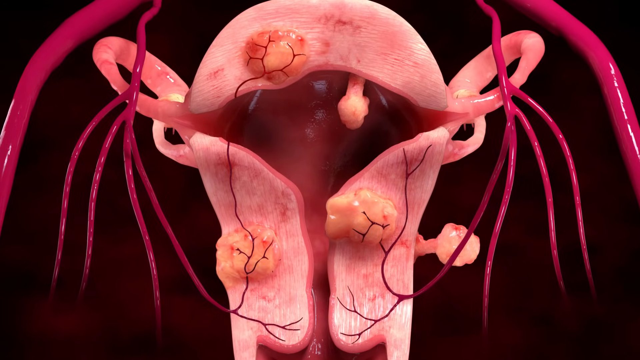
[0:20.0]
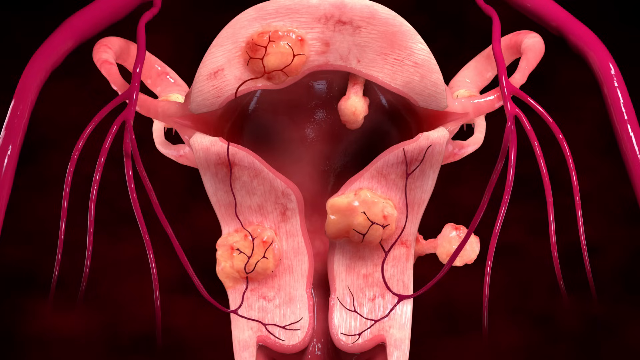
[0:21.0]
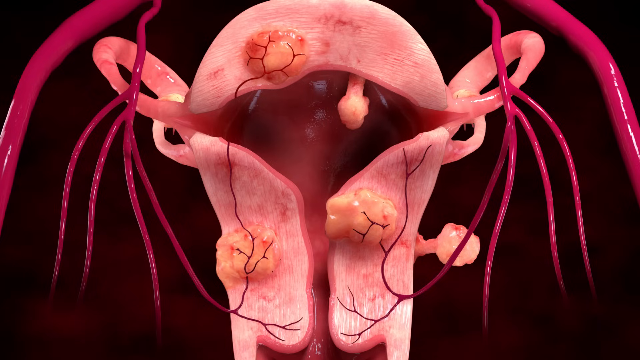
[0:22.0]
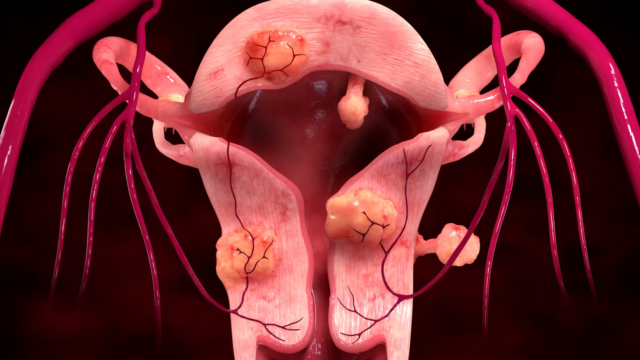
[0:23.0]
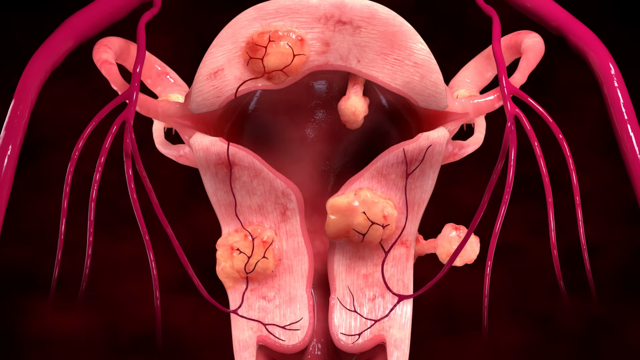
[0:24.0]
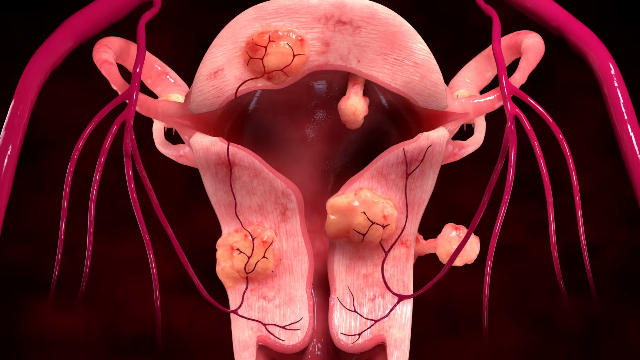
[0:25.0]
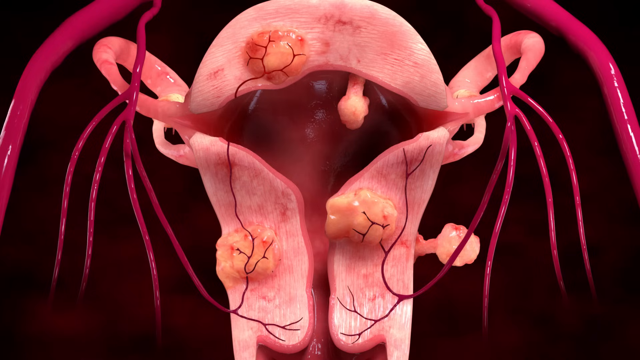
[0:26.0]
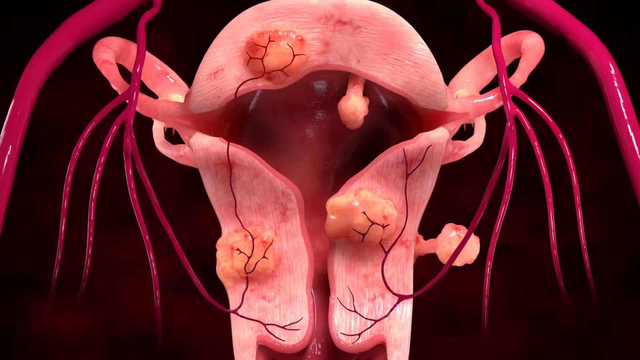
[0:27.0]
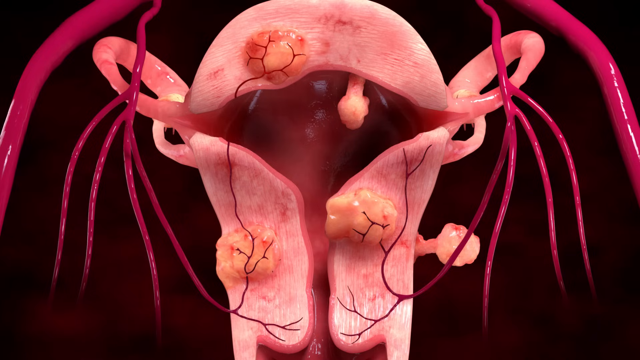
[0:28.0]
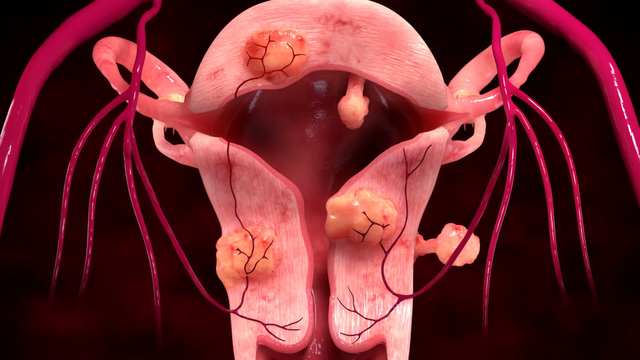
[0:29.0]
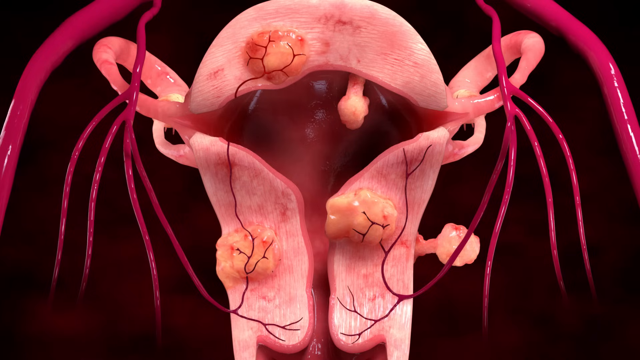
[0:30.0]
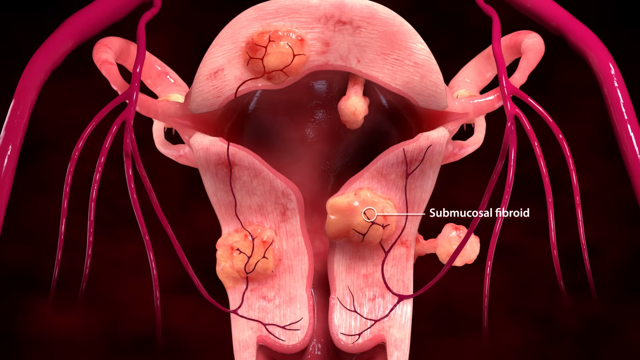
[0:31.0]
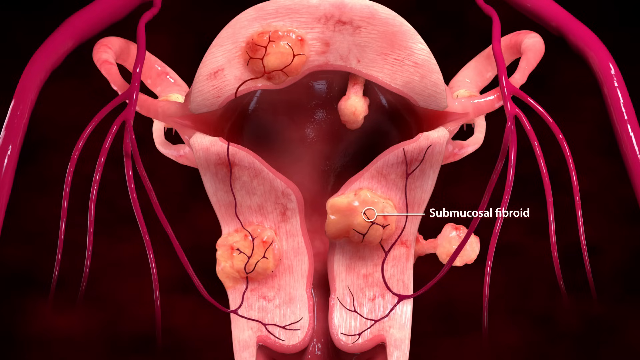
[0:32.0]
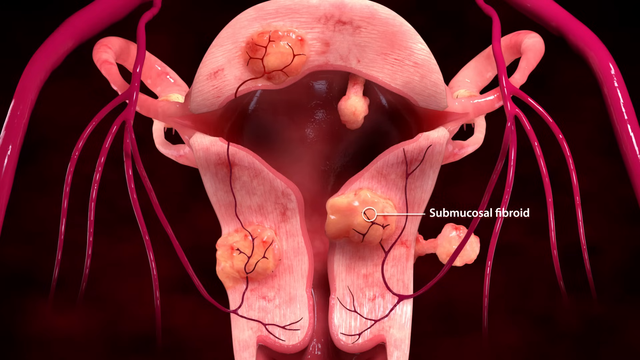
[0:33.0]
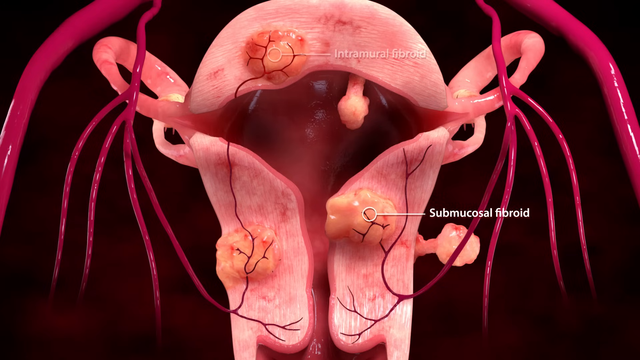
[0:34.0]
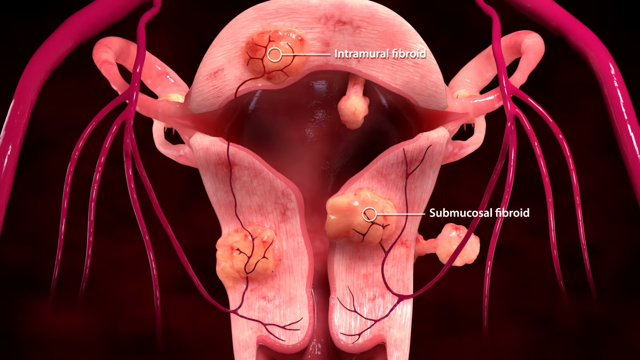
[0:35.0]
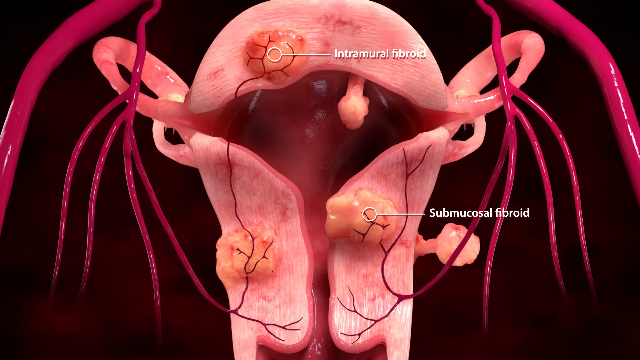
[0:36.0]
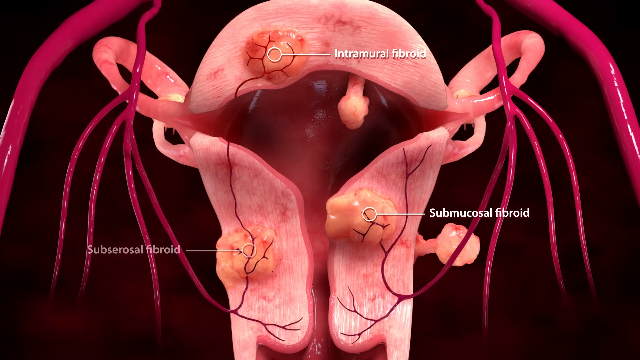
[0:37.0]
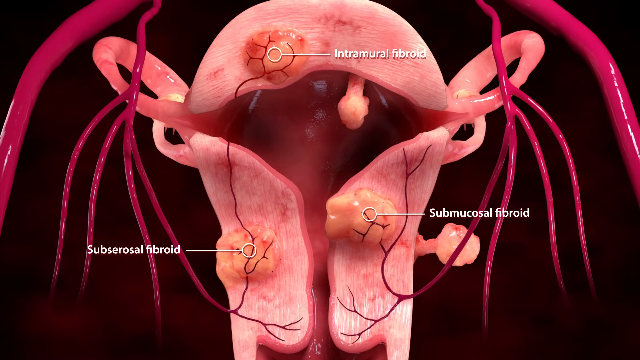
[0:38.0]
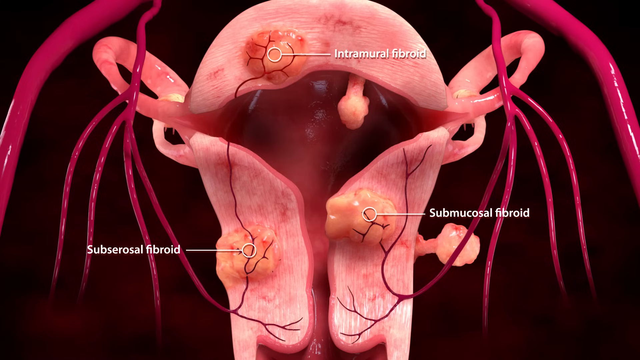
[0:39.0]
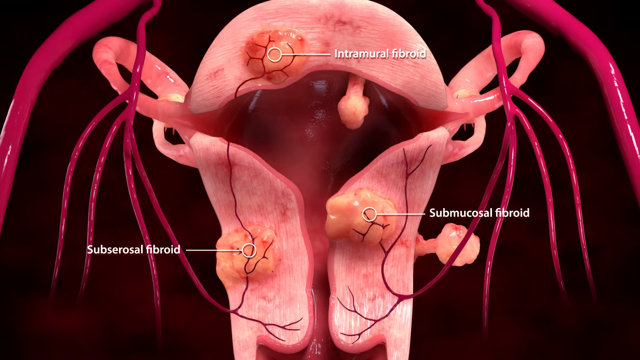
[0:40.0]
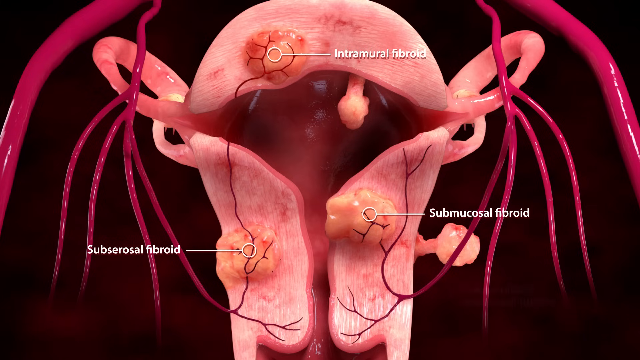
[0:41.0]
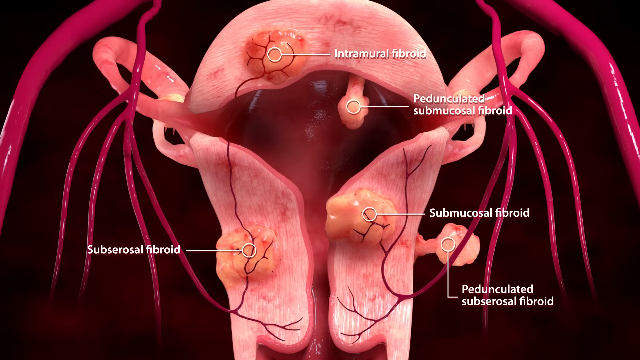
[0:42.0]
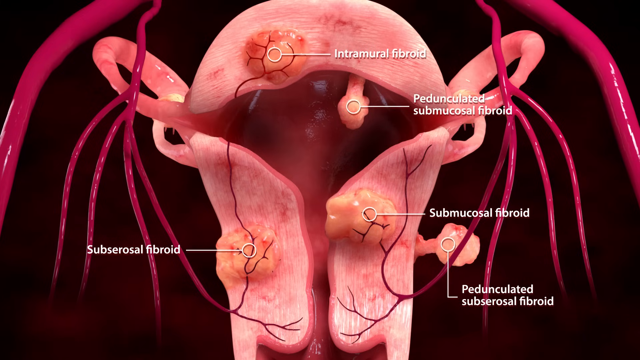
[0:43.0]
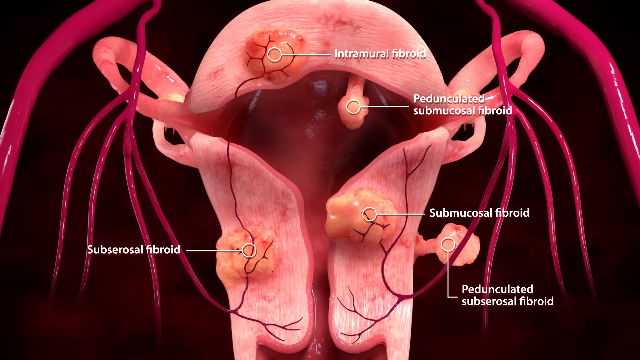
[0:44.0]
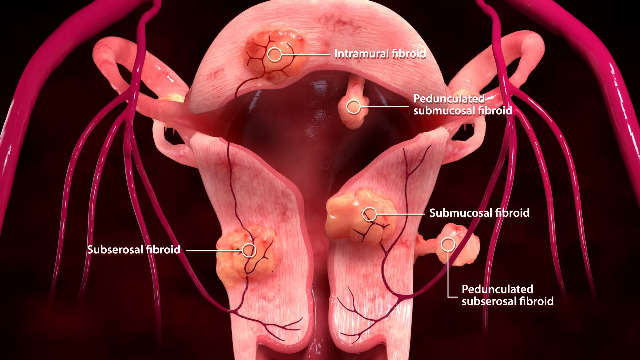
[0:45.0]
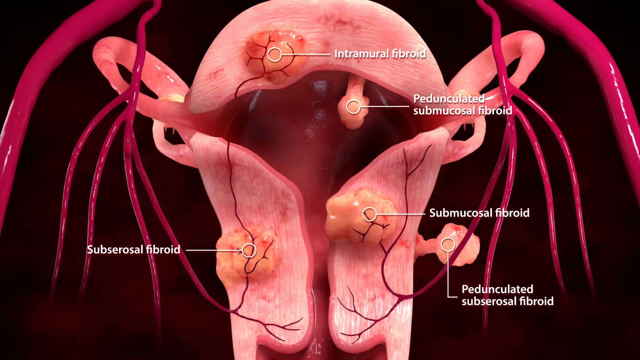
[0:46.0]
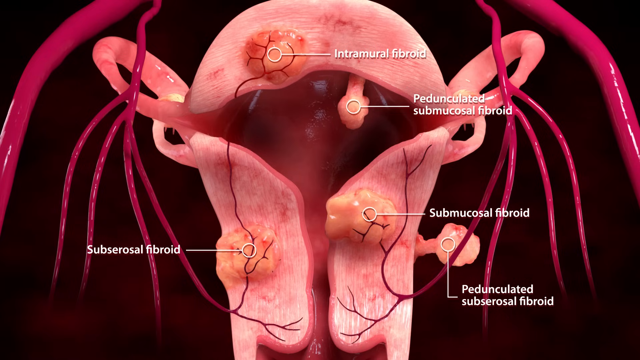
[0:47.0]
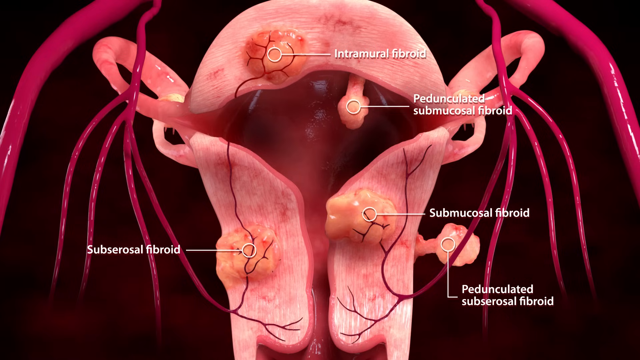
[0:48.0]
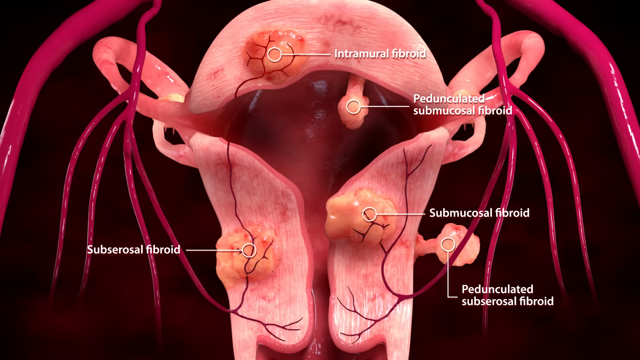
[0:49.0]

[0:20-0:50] A sort of CGI version of a uterus with uterine fibroids is shown in cross section. Some fibroids are embedded in the lining of the uterus, some look kind of like flesh-colored Brussels sprouts sticking three-dimensionally into the uterus, and some grow on the outside of the uterus into the body cavity. They seem to have a blood supply, with veins going to them. The fallopian tubes and some major blood vessels are visible, but the ovaries are not. Labels then appear: one fibroid growing into the uterine wall is labeled "intramural fibroid", one popping out is labeled "submucosal fibroid", one going into something like a vein is labeled "subserosal fibroid", and another popping out like broccoli or a Brussels sprout is labeled "pedunculated subserosal fibroid".